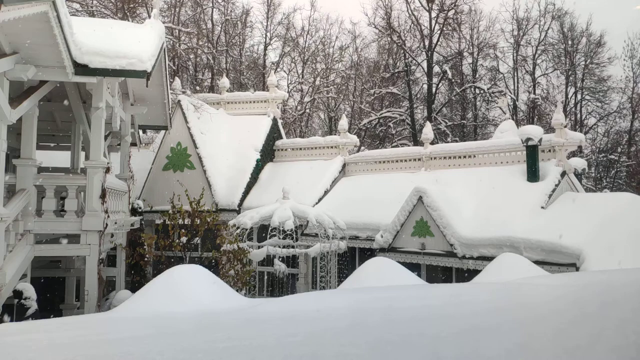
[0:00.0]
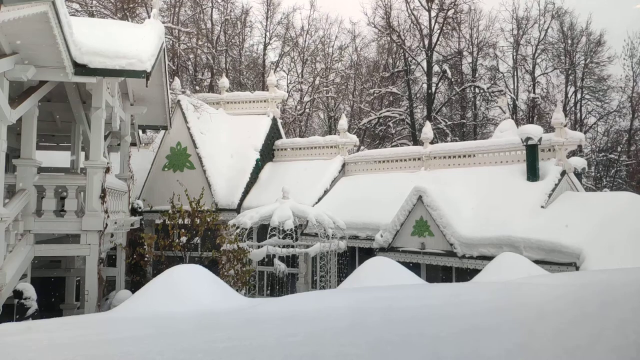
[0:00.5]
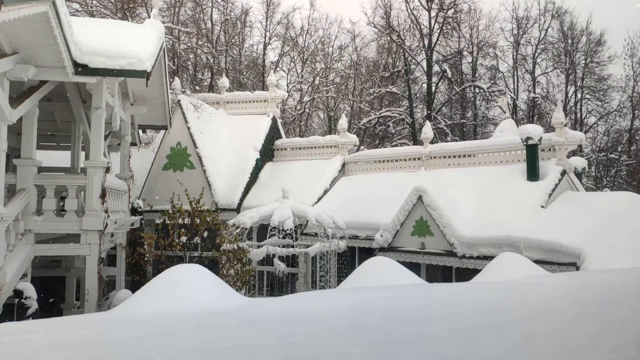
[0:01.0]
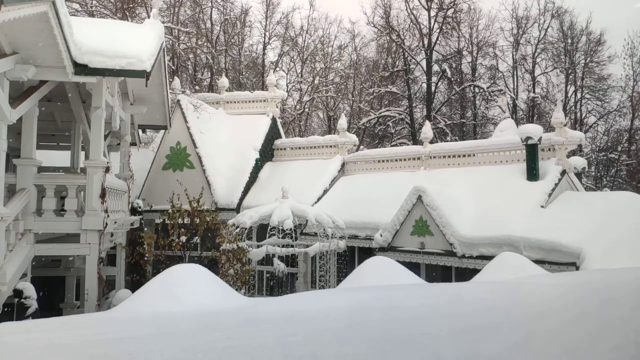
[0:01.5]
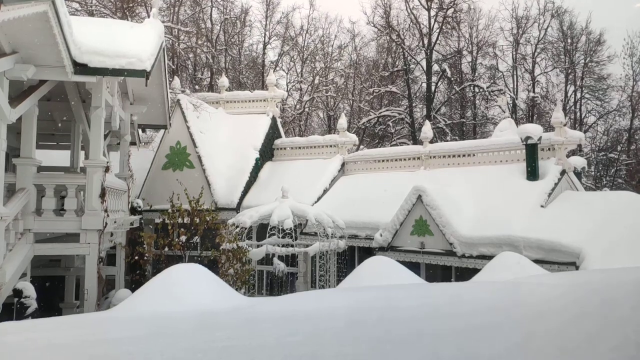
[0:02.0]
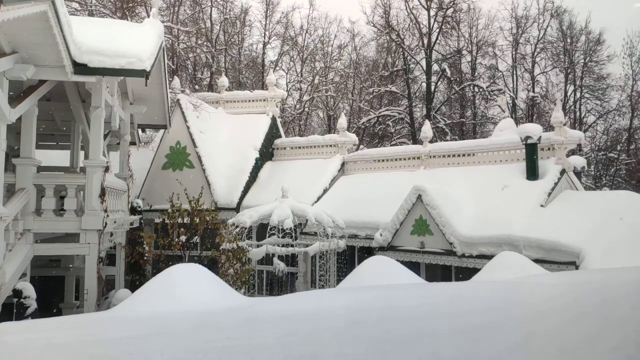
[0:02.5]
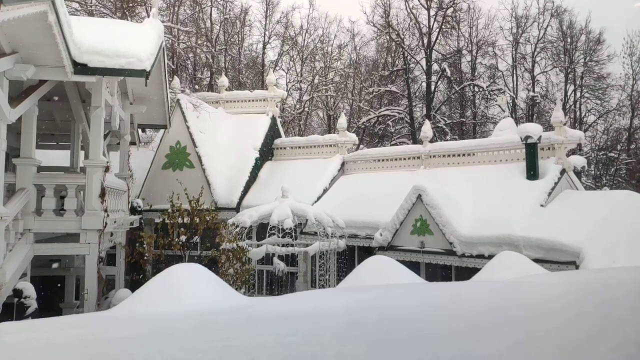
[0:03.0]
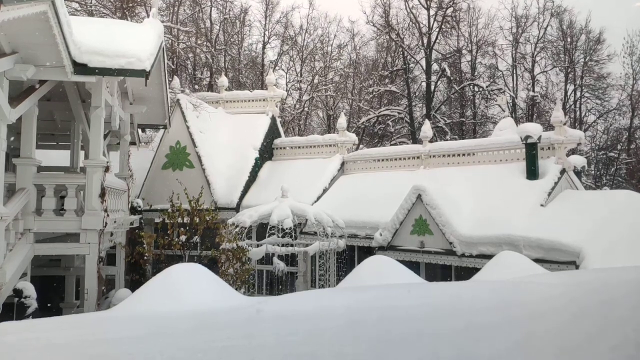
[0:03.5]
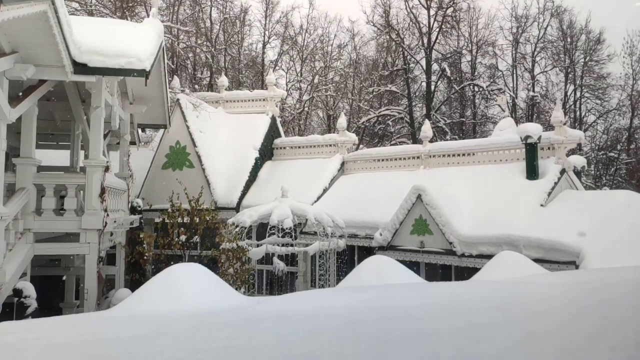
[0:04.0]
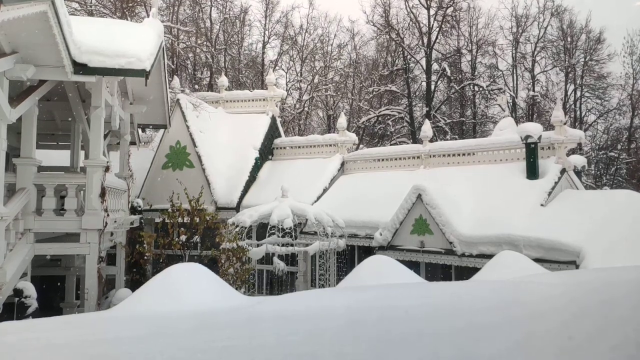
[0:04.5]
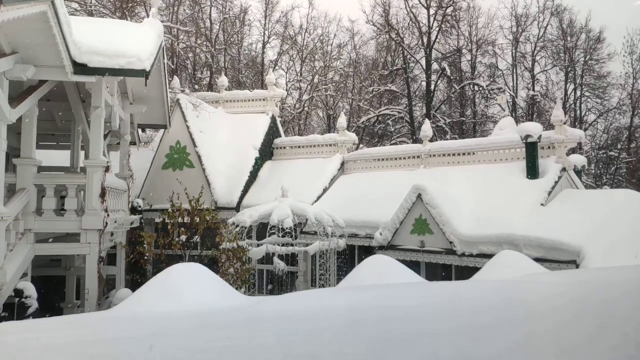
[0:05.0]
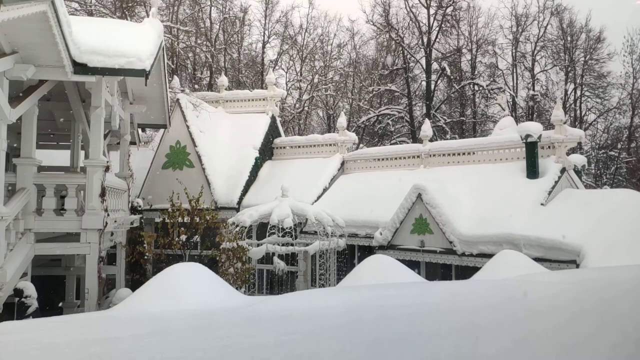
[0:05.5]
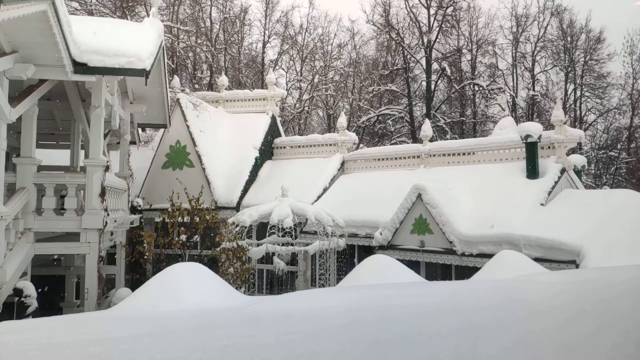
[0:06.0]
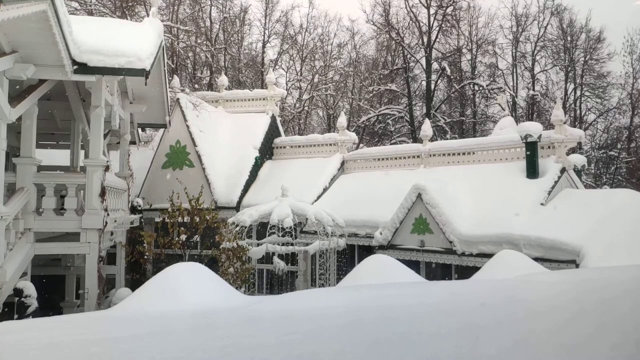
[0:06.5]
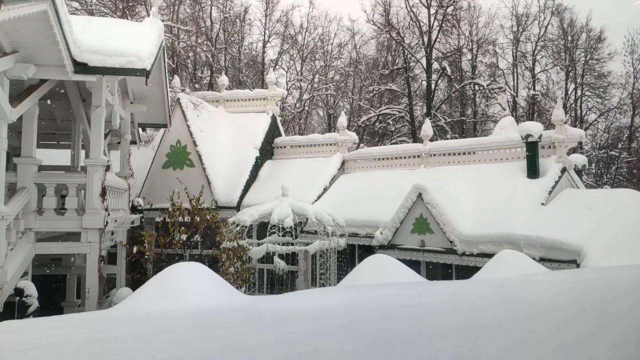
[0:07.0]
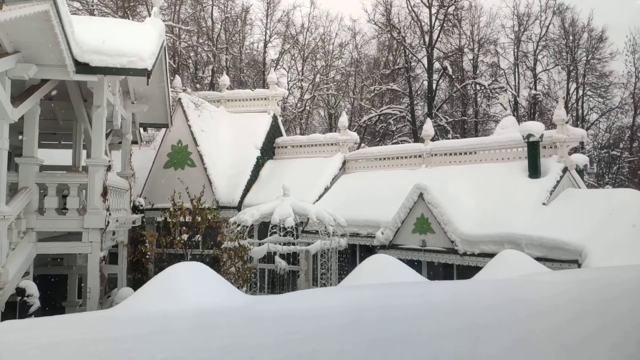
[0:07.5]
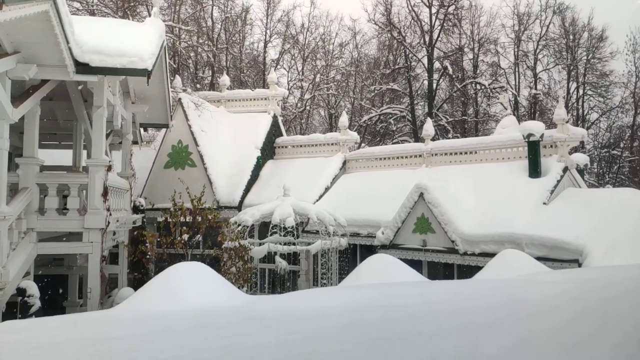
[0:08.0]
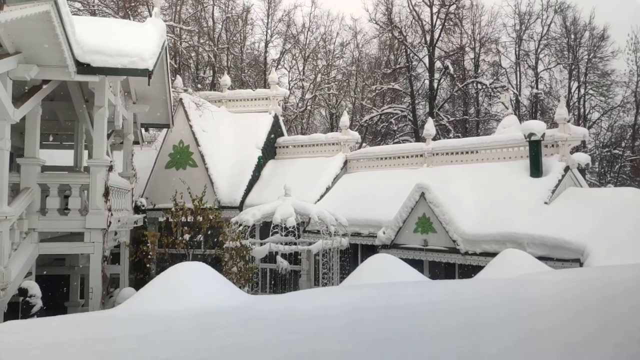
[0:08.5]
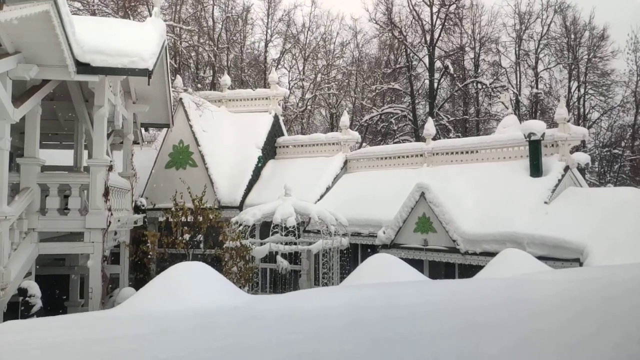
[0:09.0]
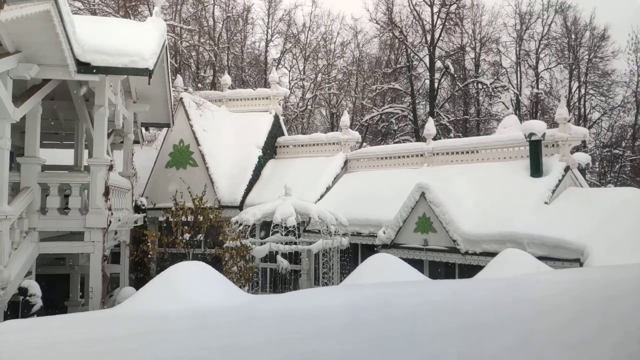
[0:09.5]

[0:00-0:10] Snow falls on a building that appears to have a lot of snow on top of it, with leafless trees in the background. What appear to be white stairs lead up to a crosswalk into the building. There is green signage in front of the building, and there appears to be a small gazebo out in front of it. A lot of snow is on the roof, and the snow appears to keep coming down in a steady flow, with individual snowflakes visible as they fall; there appear to be several inches of snow on the roof. The roof is angled downward and has a few triangle spikes in the middle in two different areas, each with a small green sign above it. There appears to be a hole where a chimney is, where steam would apparently come up. A lot of snow also covers the crosswalk. The view appears to be from the side, looking like the top of the roof from the other side. The trees have snow on their branches; all the visible branches seem to have a little snow on them, so it looks like it has been snowing for a while.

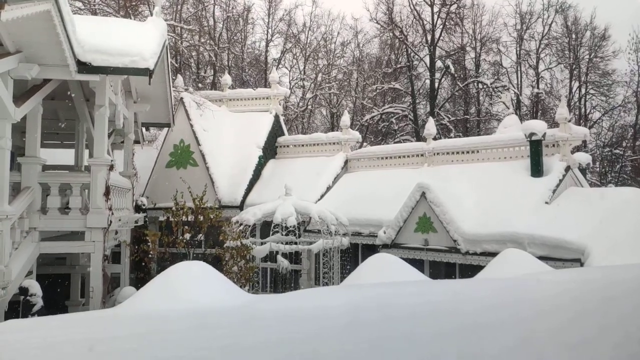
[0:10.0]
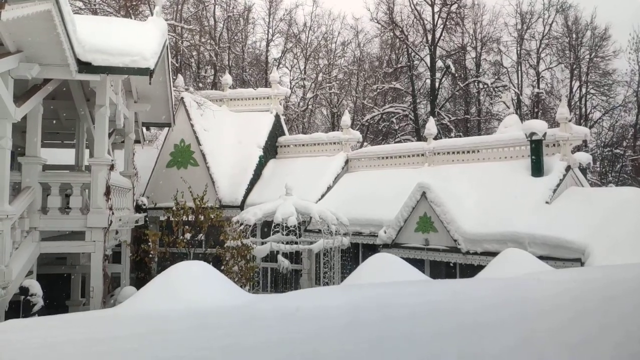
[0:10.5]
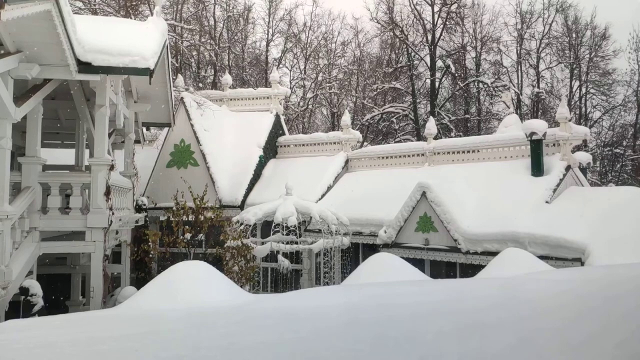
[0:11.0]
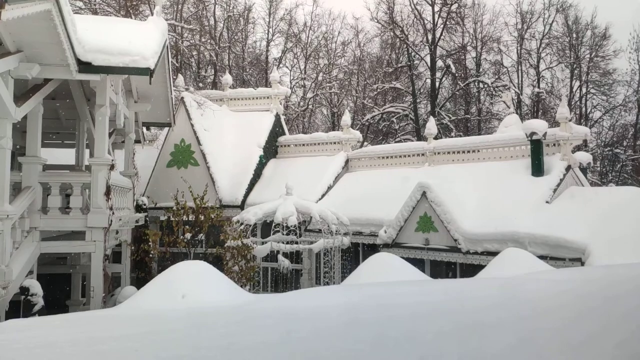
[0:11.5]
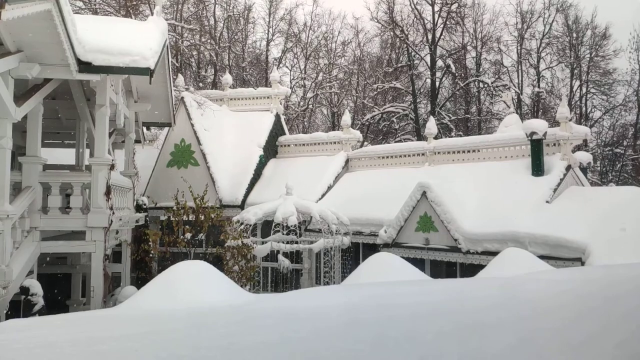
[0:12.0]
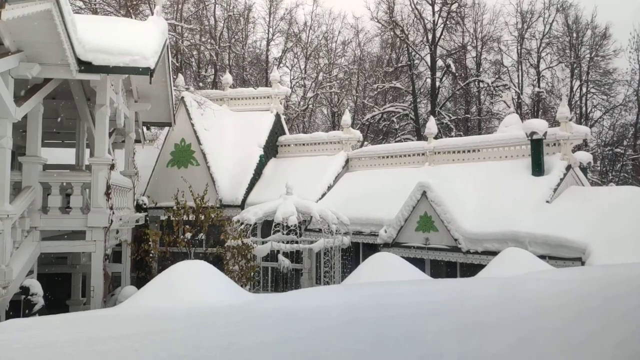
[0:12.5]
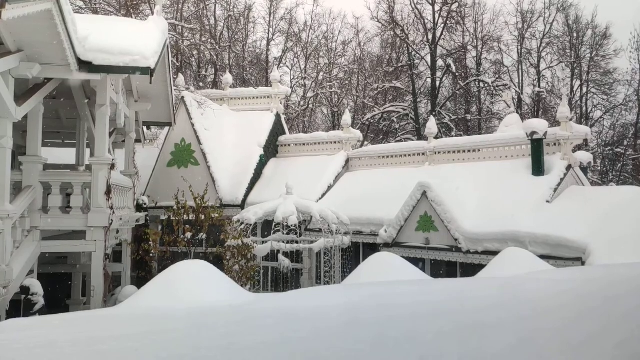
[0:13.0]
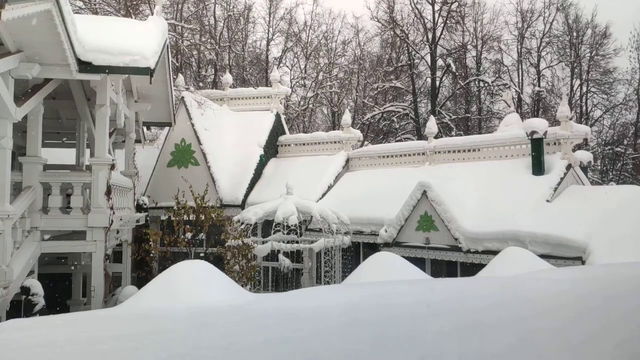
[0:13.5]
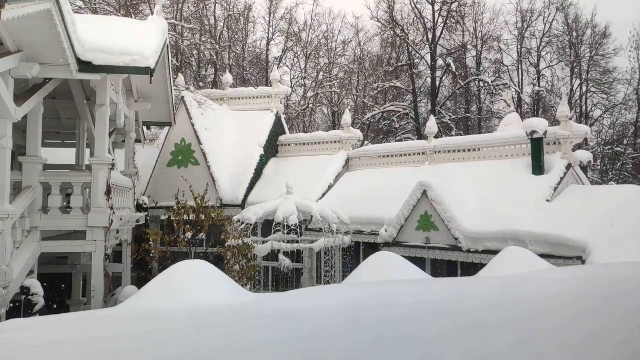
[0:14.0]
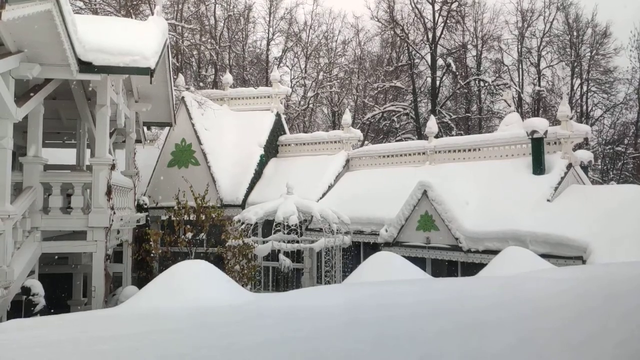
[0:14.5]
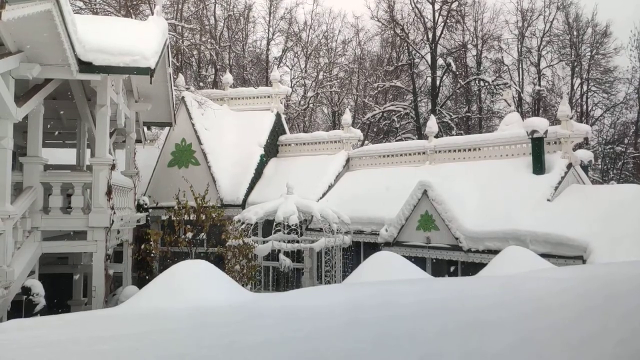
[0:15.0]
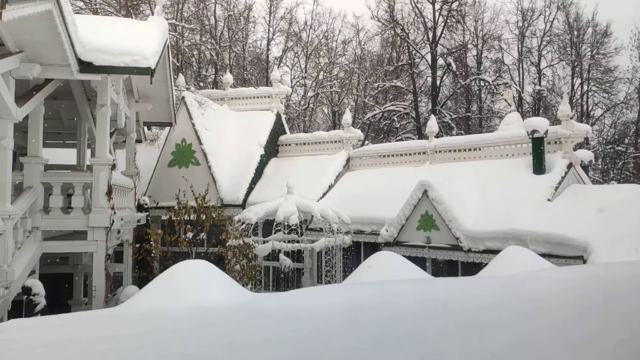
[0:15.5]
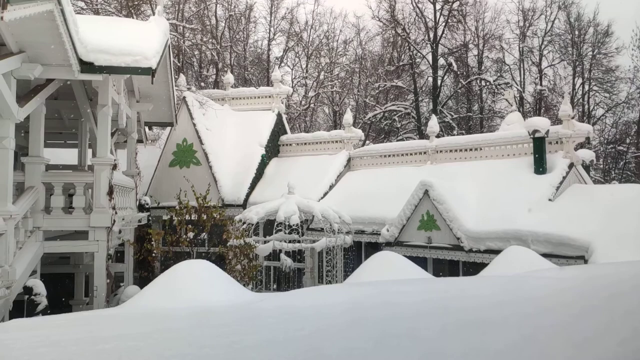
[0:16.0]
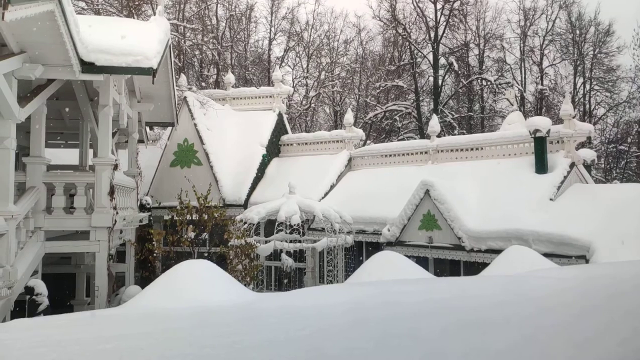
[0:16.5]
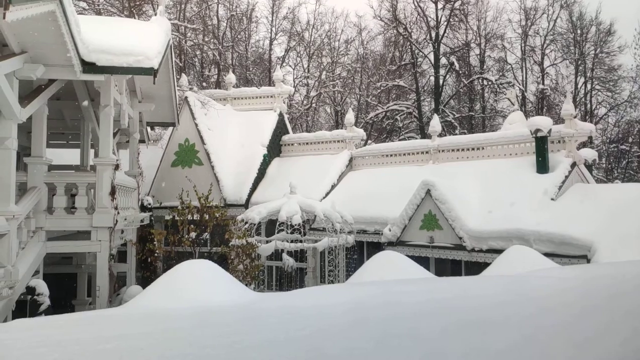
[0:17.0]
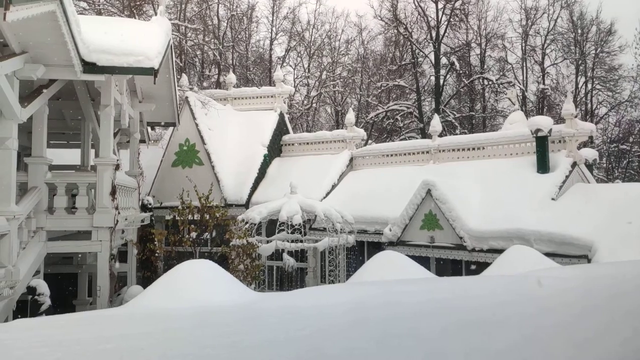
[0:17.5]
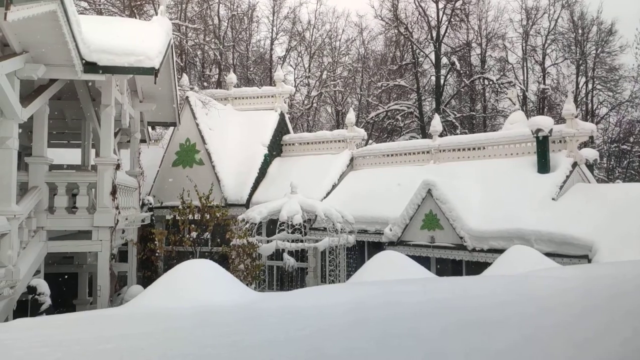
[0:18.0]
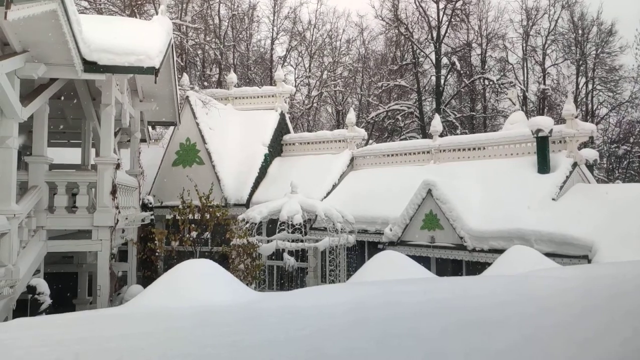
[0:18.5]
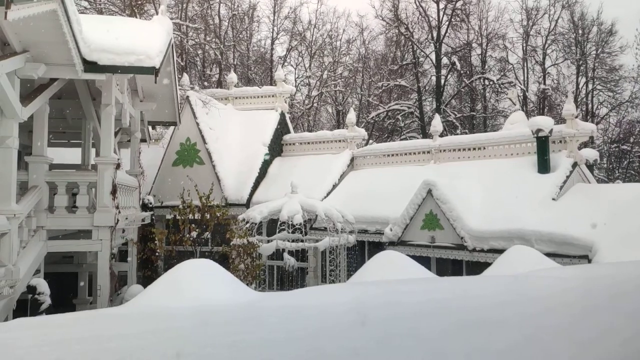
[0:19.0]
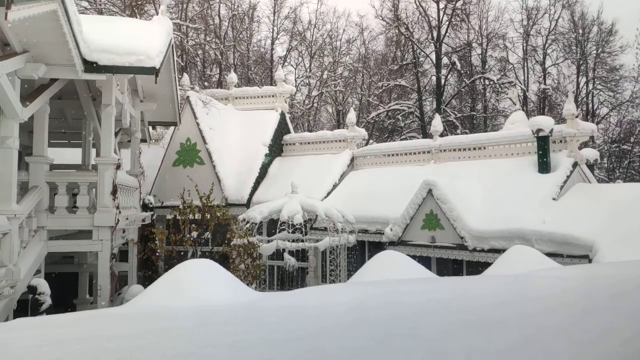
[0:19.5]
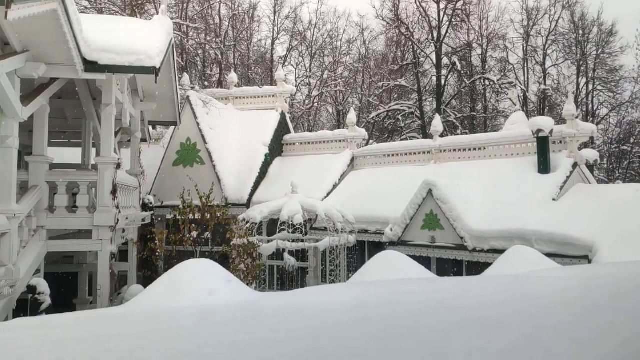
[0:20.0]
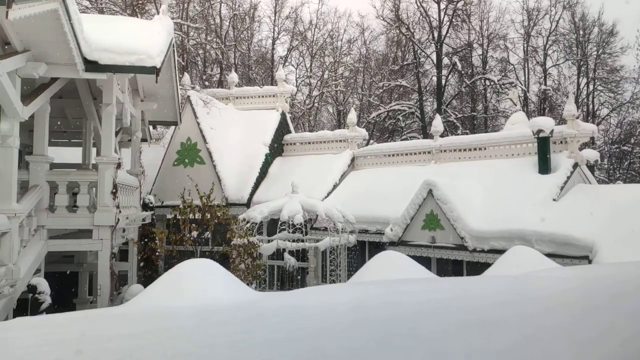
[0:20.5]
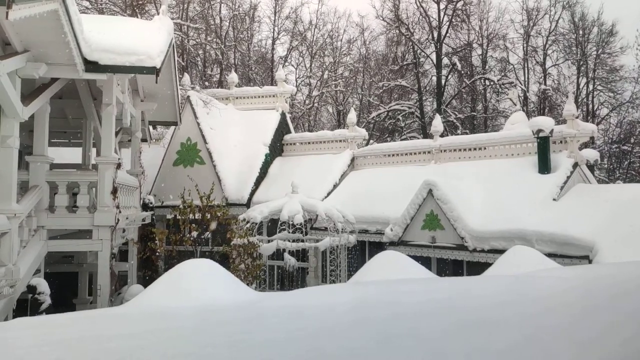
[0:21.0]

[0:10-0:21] Snow appears to be falling on a snow-covered building. A white staircase goes up into an area that crosses over to the building. The building's slanted roof is full of snow, apparently several inches, at least about a couple of inches thick. Large, tall trees behind the building have branches full of snow as well. A small white gazebo in front of the building also has snow on top of it and on its sides. It appears to have been snowing for a little while, as the snow has accumulated on the roof. The angle appears to be a straight view shot from another part of the roof. A lot more snow keeps coming down, and it looks like it has been snowing continuously for at least a little while.